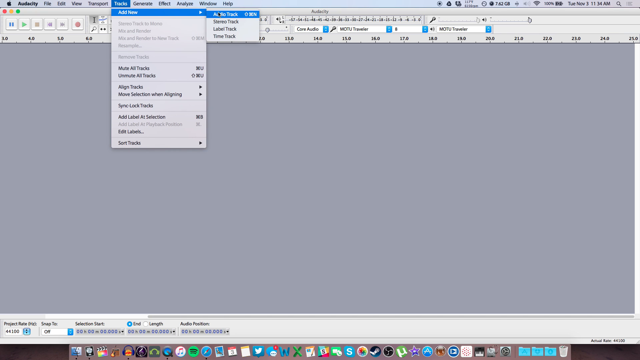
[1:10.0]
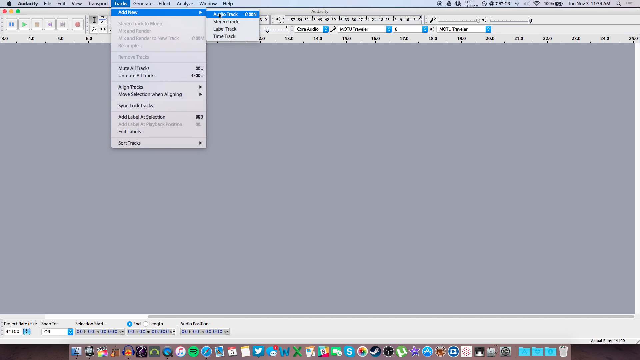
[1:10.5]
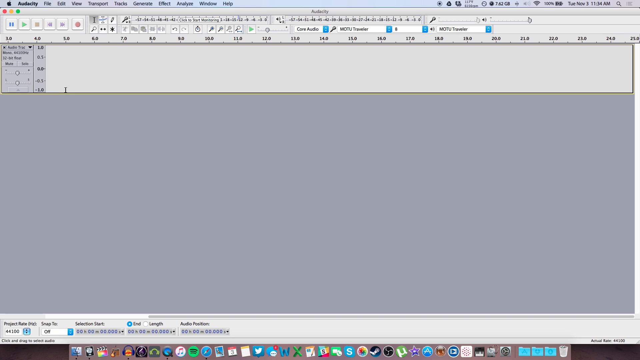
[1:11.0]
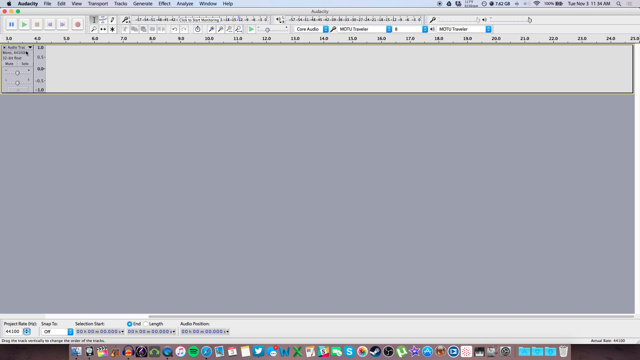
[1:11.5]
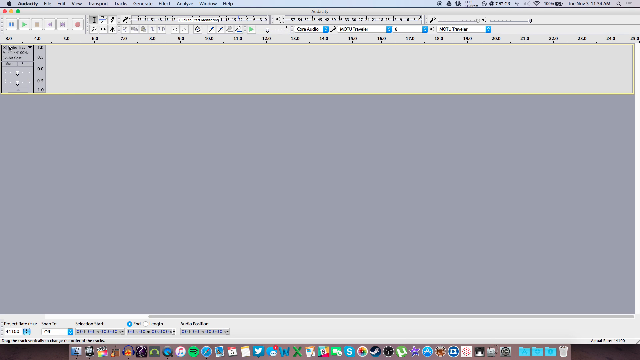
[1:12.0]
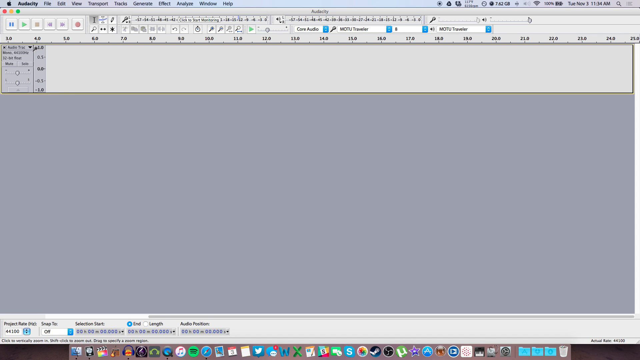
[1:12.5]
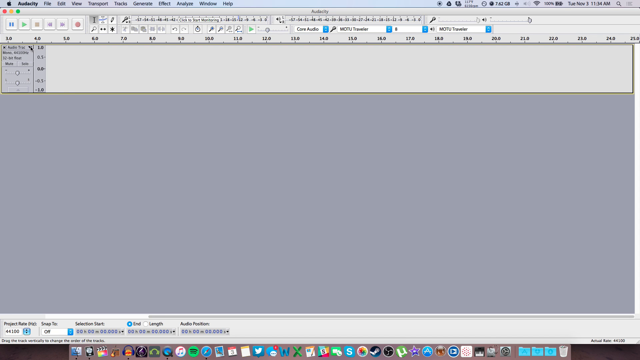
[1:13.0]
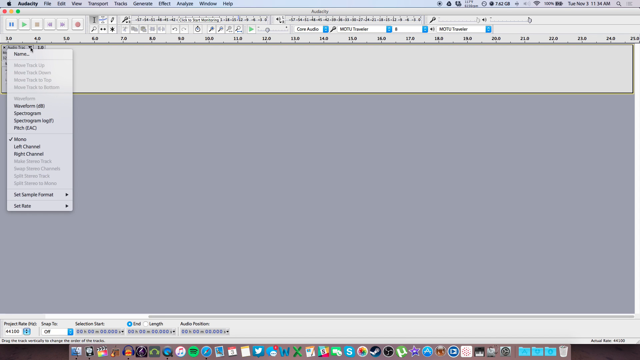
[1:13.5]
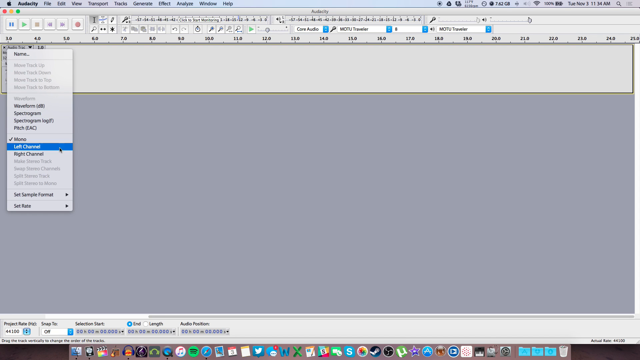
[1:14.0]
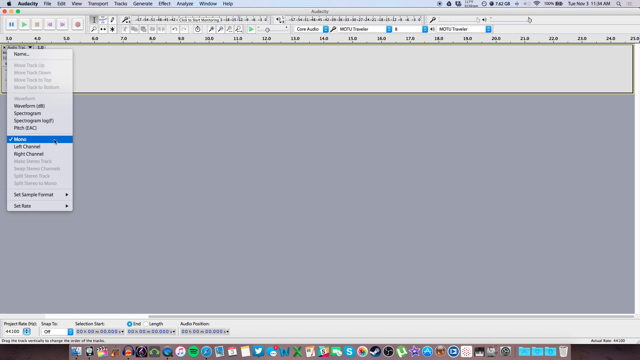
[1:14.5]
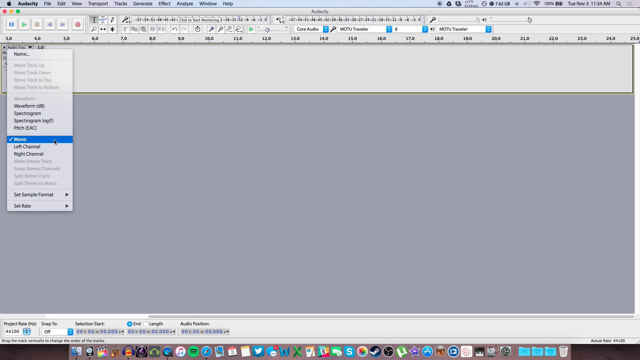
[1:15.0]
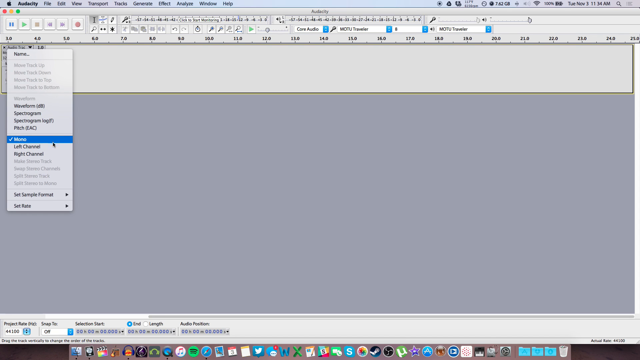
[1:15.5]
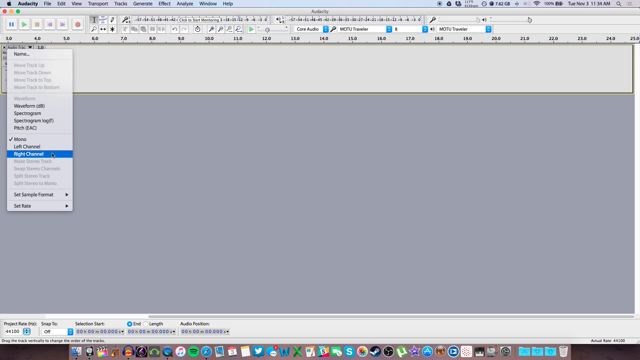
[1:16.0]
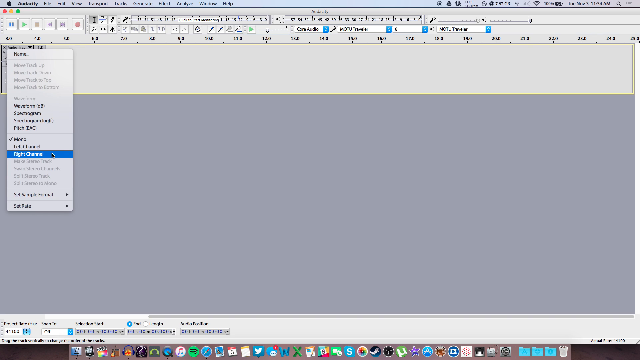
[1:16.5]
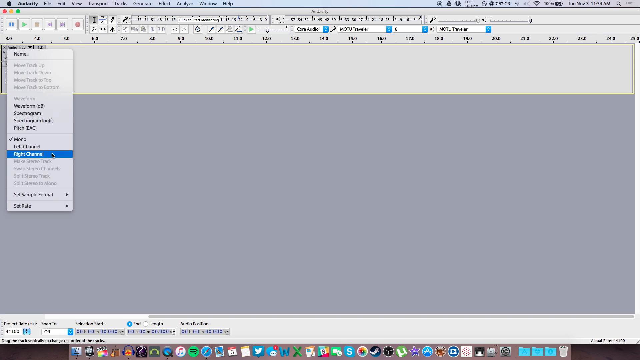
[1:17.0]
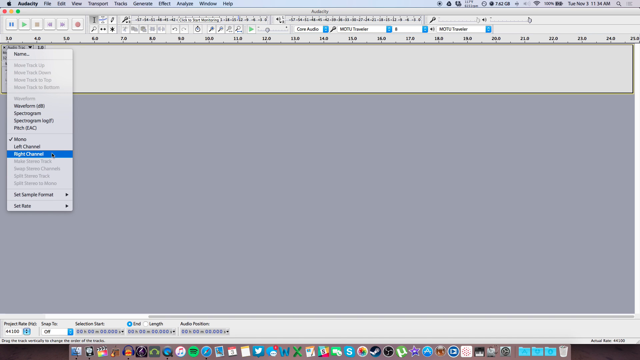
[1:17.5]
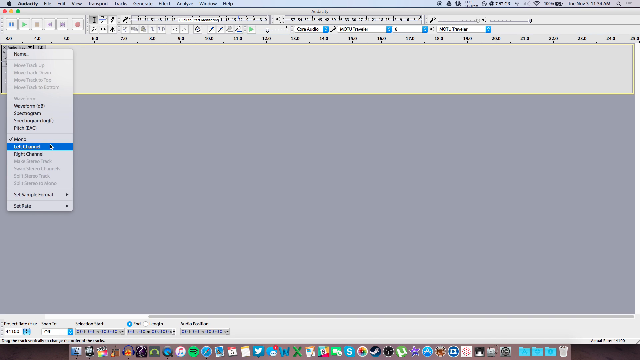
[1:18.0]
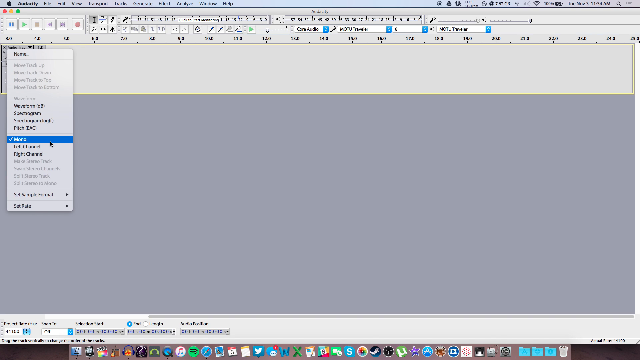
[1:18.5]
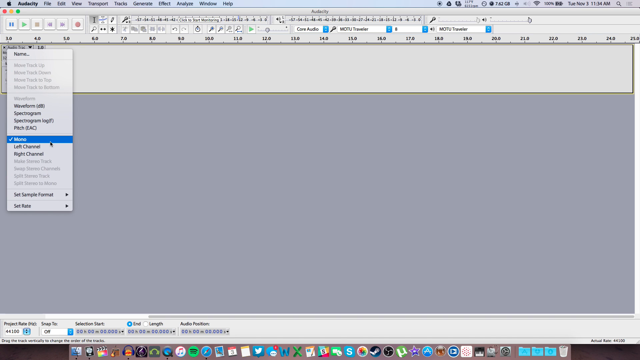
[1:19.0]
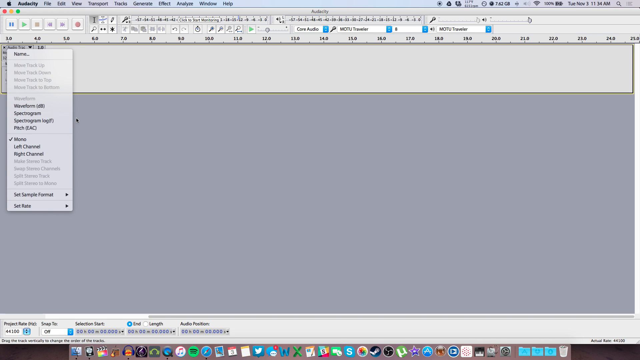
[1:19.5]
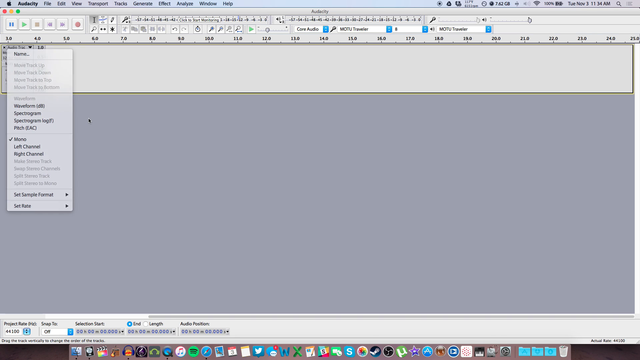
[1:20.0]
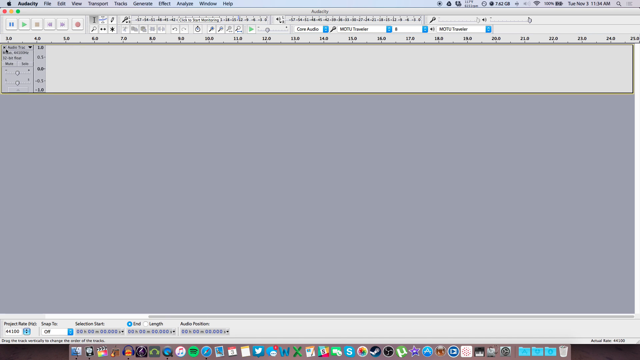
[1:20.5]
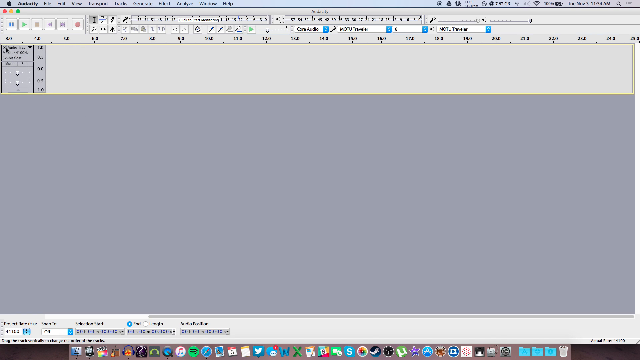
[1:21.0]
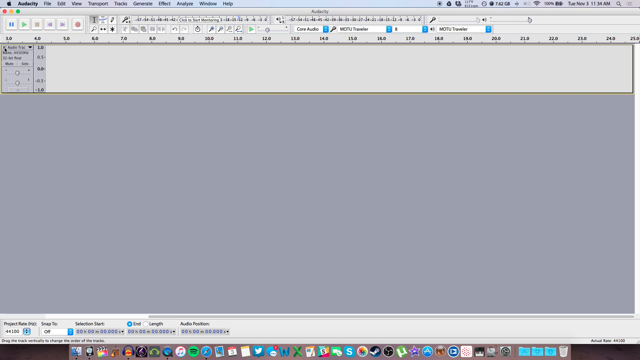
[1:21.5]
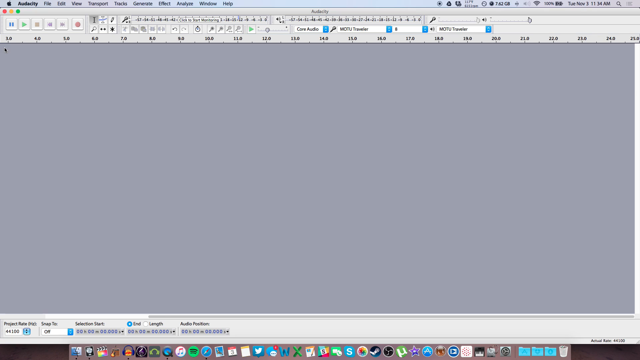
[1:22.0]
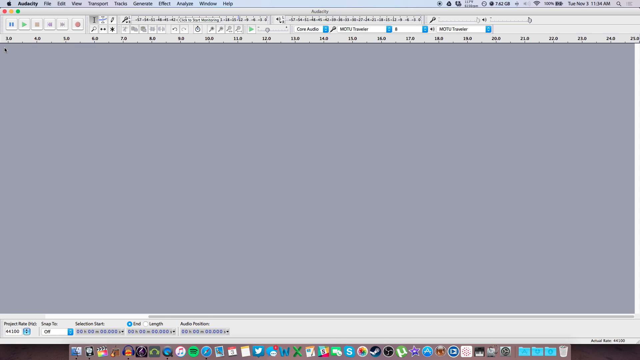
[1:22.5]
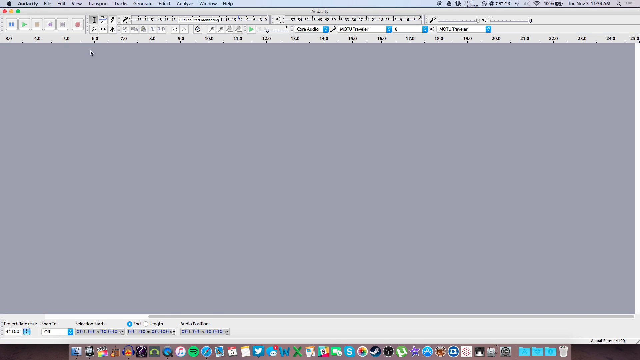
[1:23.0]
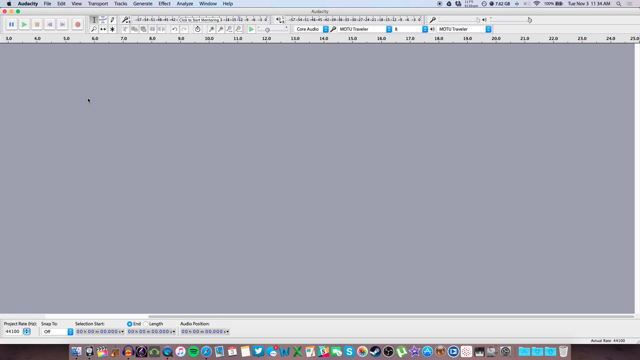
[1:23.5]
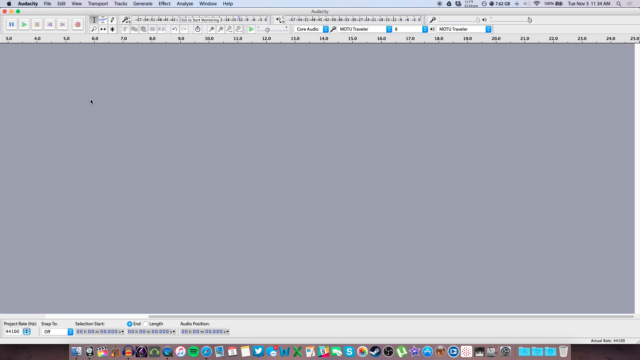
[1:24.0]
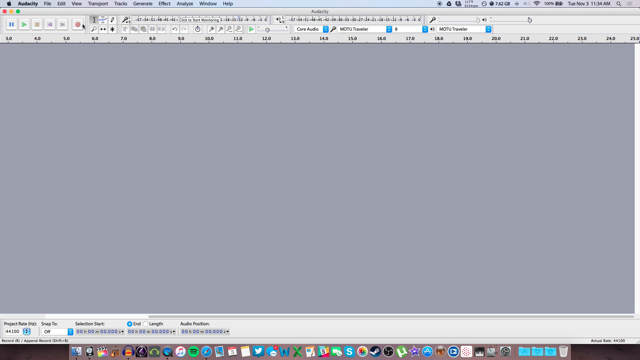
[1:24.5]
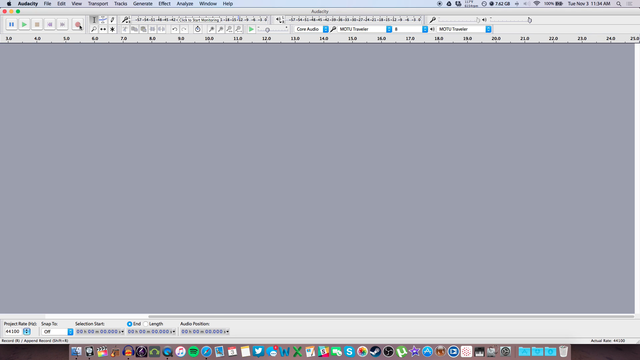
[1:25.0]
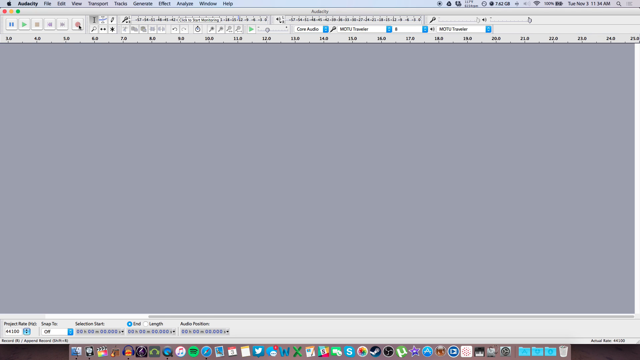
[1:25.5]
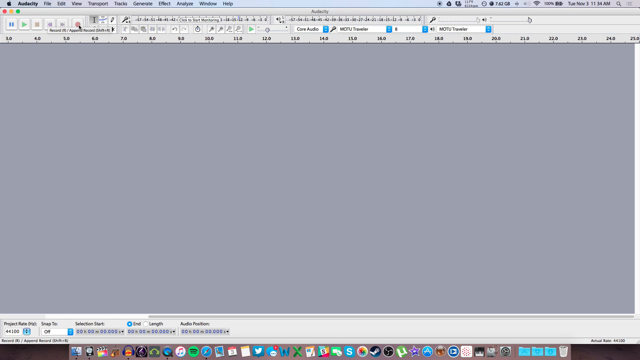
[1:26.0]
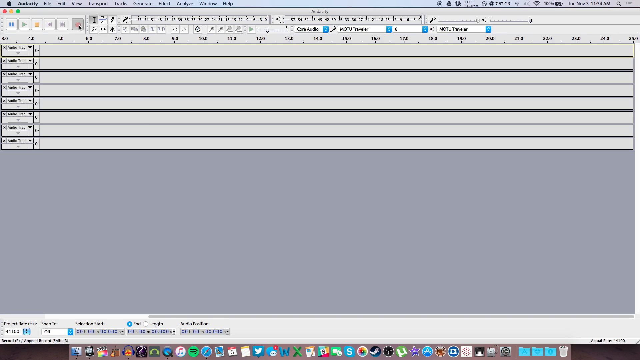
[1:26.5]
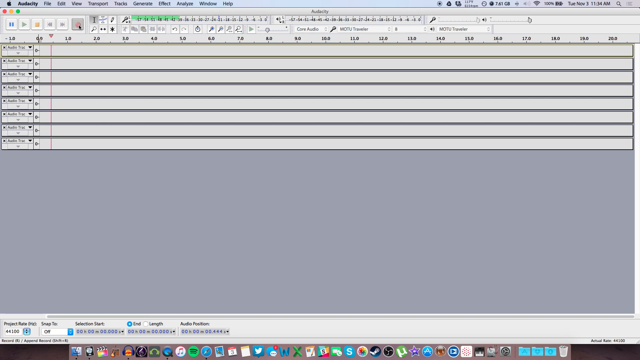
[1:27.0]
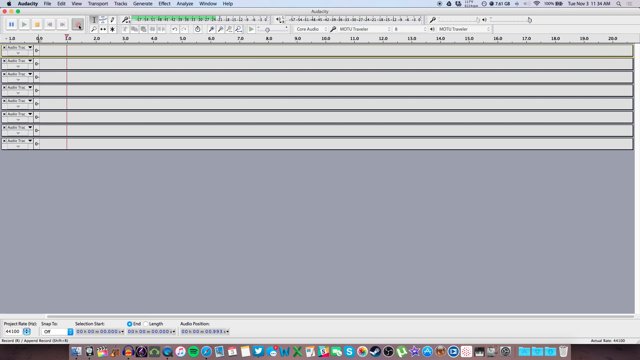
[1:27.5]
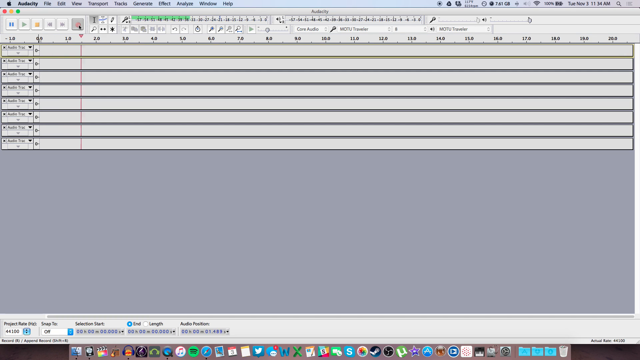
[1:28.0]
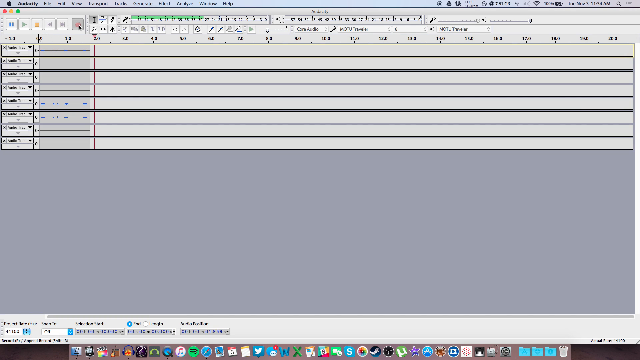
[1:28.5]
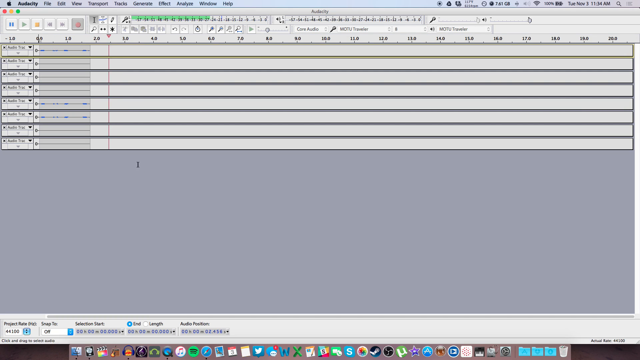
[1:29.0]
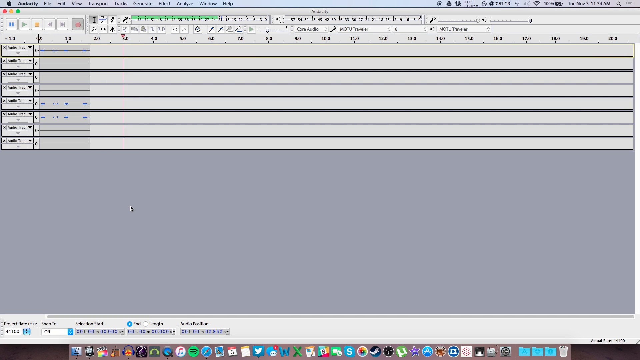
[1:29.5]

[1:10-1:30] The drop-down for tracks is open, and then the screen changes. Across probably about a couple of inches at the top half there look to be numbers on the top and numbers on the bottom, plus other things that are hard to see. A drop-down menu appears and the mouse selects from it; the options include left channel and right channel. At the top there is now a pause sign, a play sign and a record sign. The number graphs go away, leaving just a gray screen, and the person adds what looks to be a bunch of individual channels for recording. They move the mouse down the line, and as they move across the numbers the line is visible.